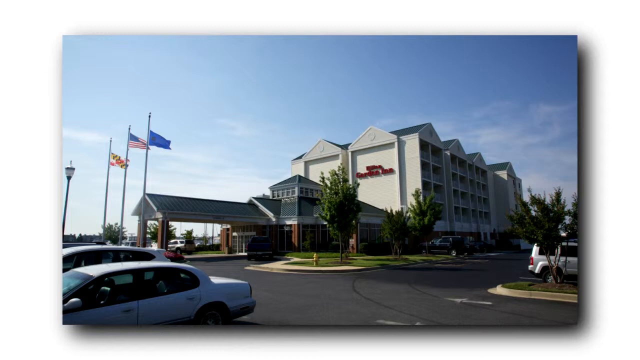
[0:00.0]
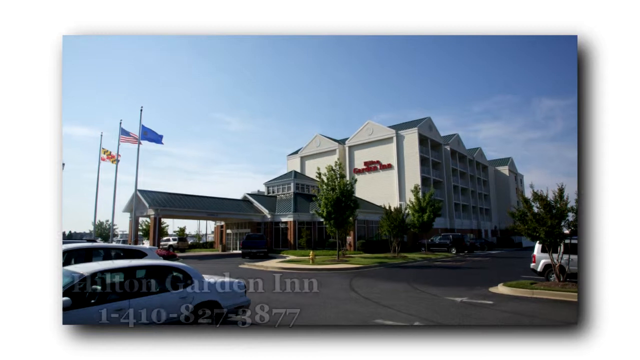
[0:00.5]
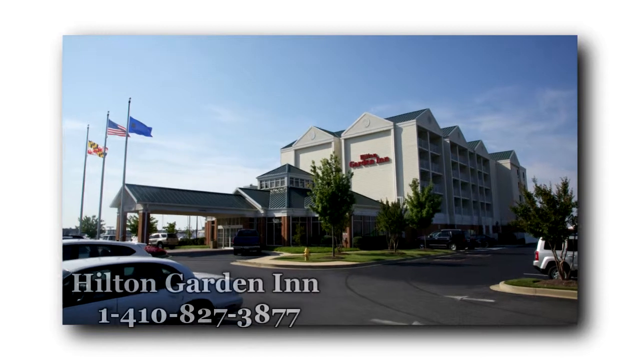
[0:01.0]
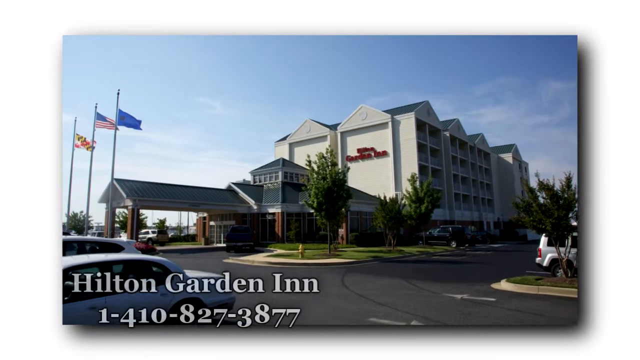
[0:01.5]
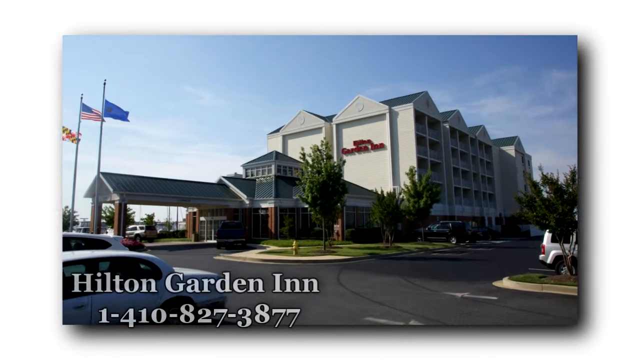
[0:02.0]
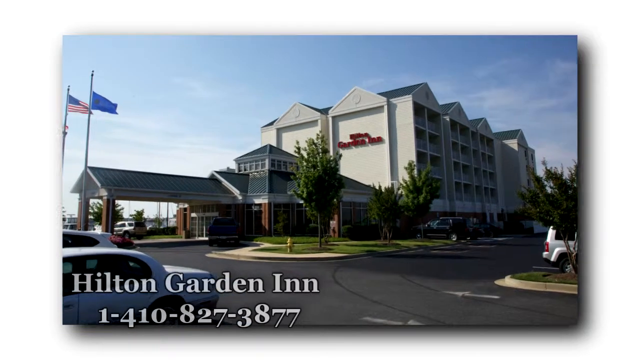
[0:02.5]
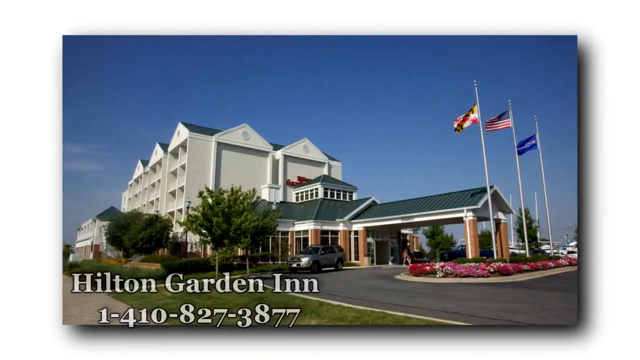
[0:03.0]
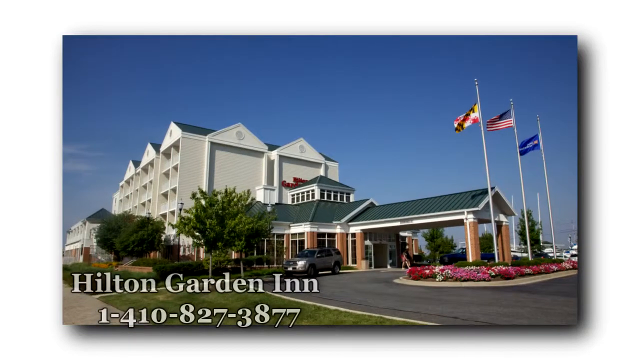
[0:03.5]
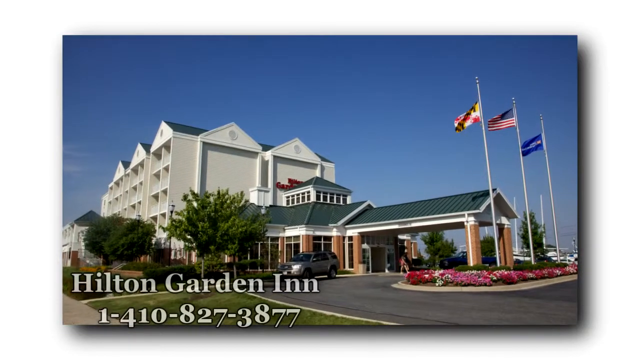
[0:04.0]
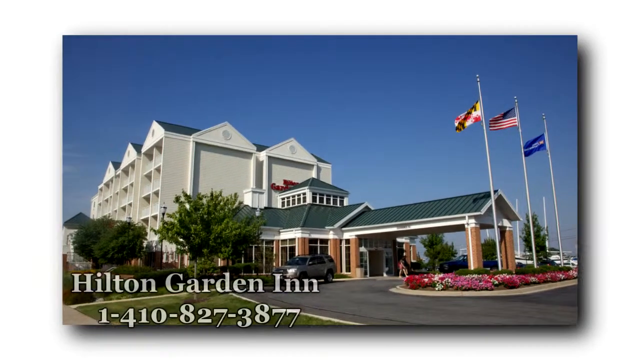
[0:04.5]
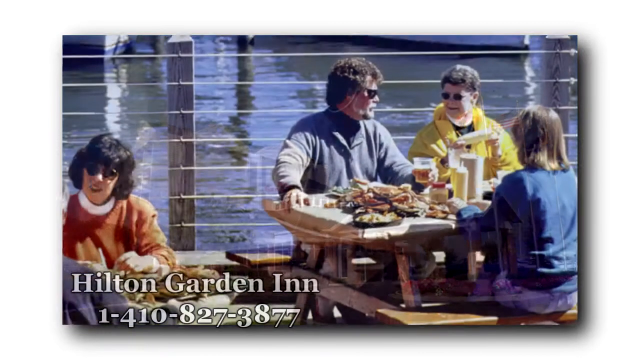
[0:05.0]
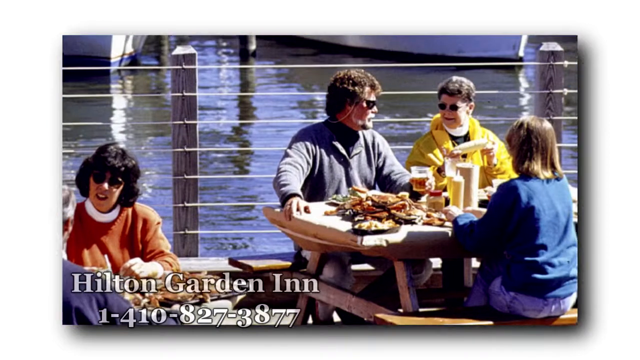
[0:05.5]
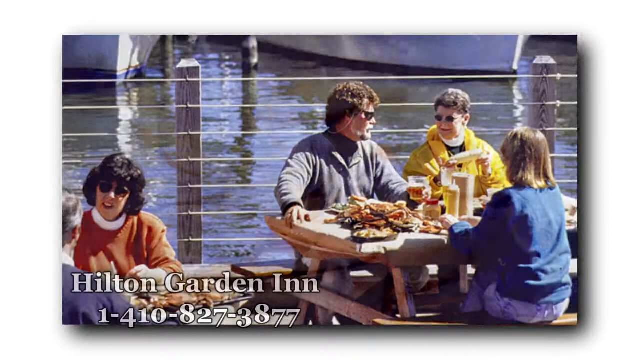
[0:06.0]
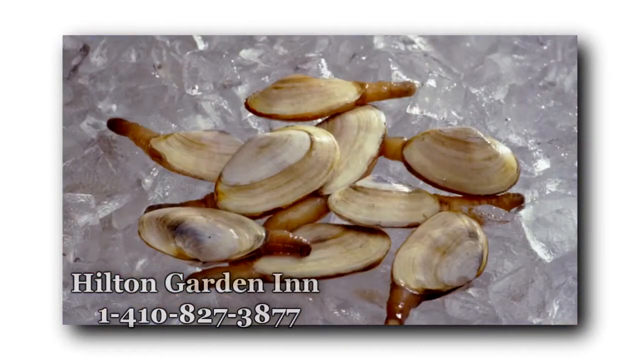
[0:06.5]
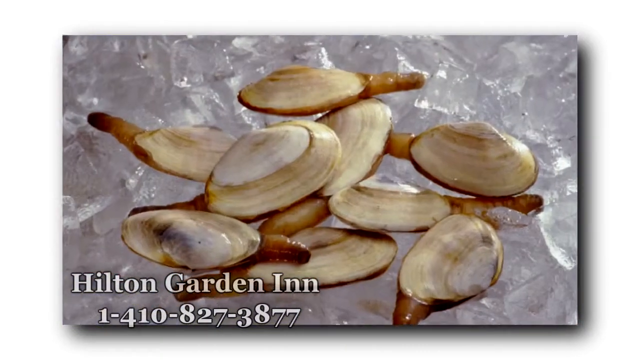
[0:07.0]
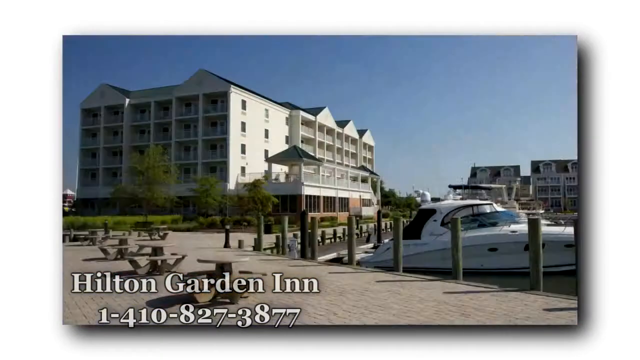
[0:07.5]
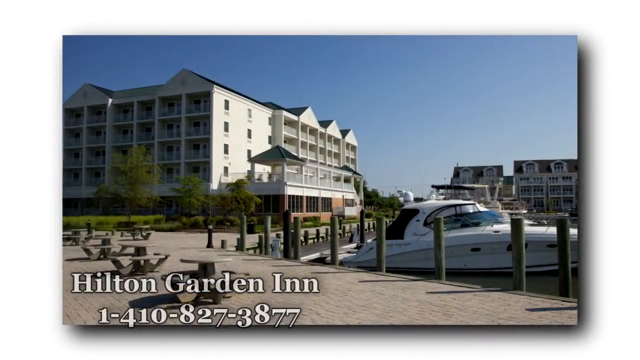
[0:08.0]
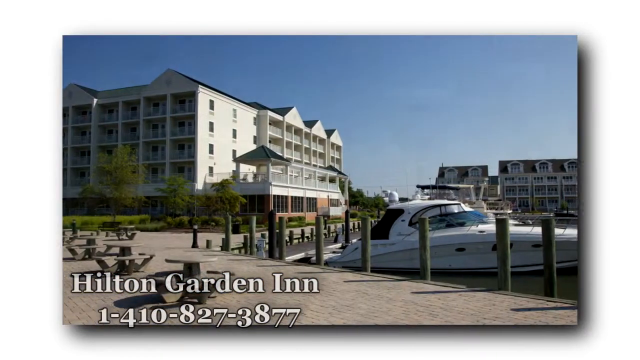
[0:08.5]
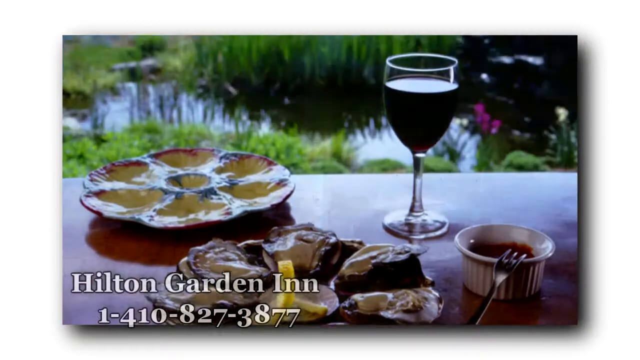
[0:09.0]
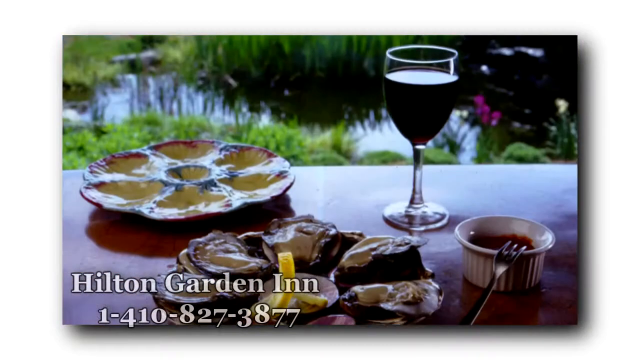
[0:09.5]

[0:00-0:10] A hotel with three flags out front appears, with the text "Hilton Garden Inn 1 4 1 0 8 2 7 3 8 7 7" on screen. The video does a little close-up of the place and shows different sites of it: it is right on the water, on a marina, with a boat there. Food is shown, along with wine and oysters on the half shell, and the place is presented as somewhere to stay with family. A picture shows a clam, and then some speed boats, probably technically yachts, appear.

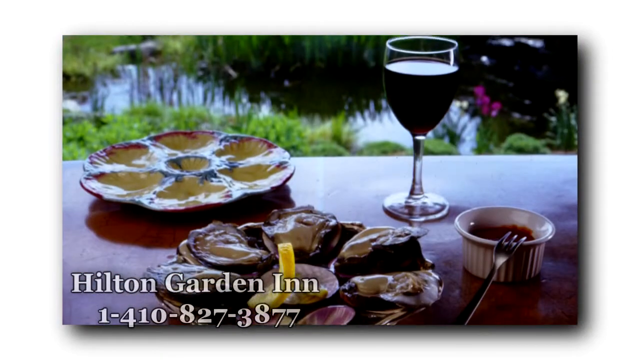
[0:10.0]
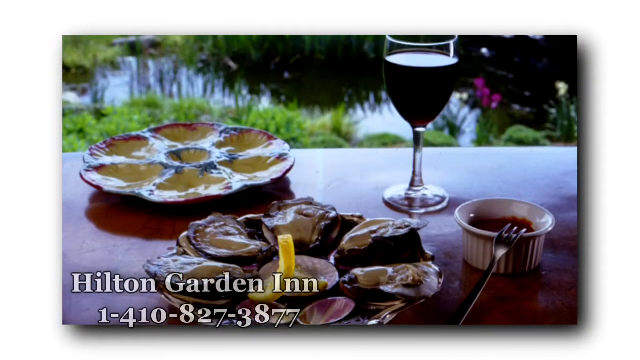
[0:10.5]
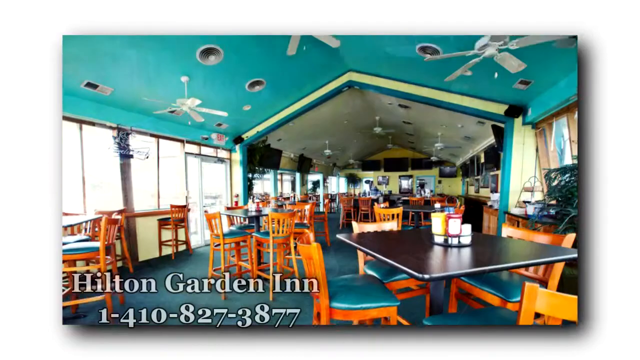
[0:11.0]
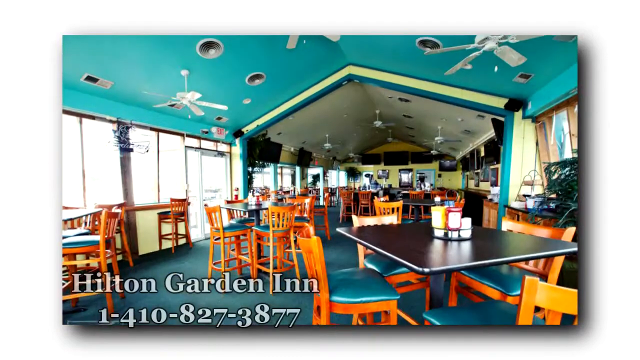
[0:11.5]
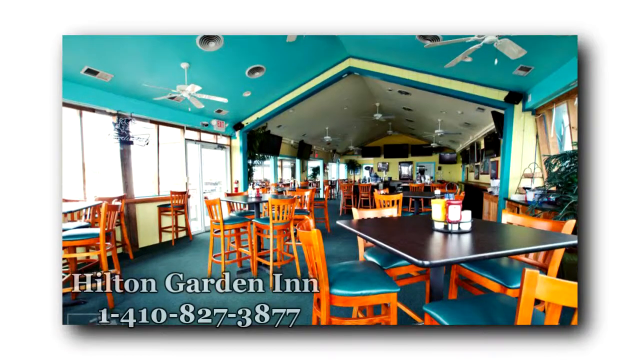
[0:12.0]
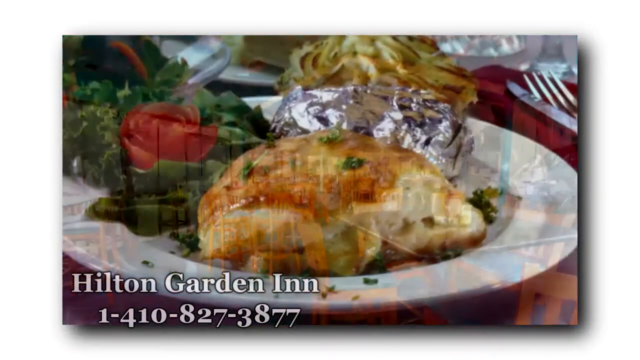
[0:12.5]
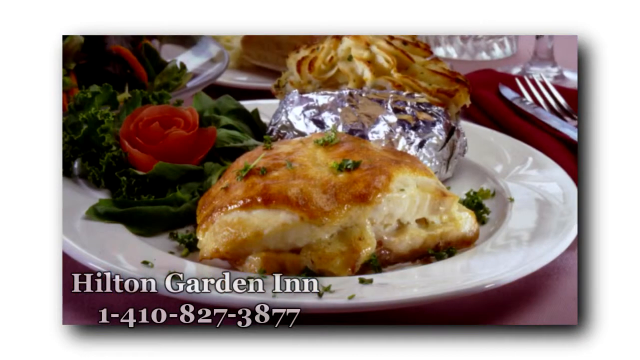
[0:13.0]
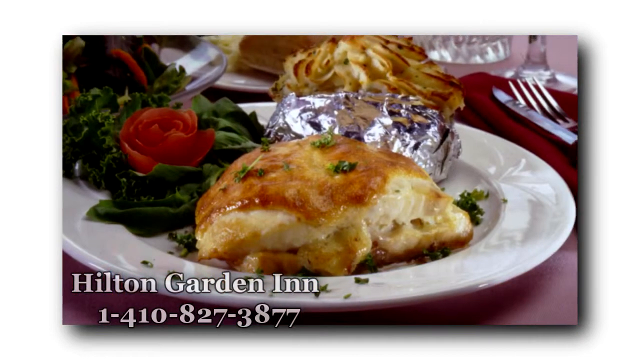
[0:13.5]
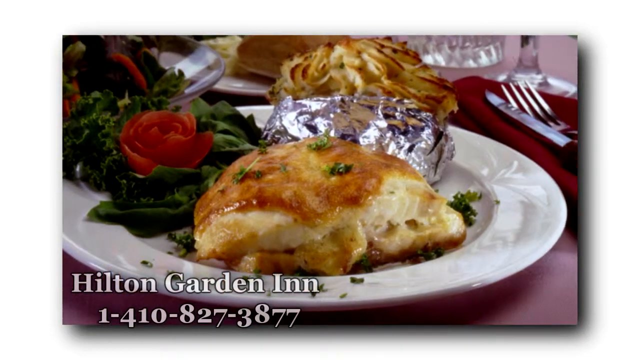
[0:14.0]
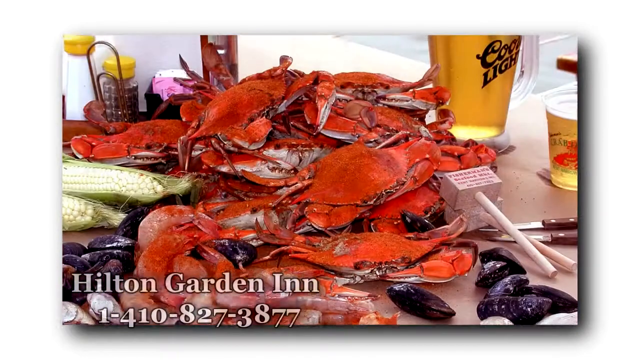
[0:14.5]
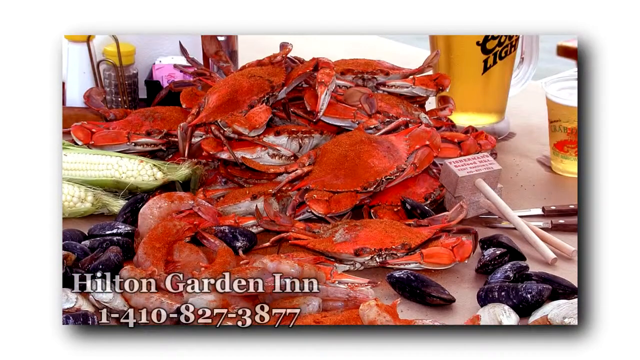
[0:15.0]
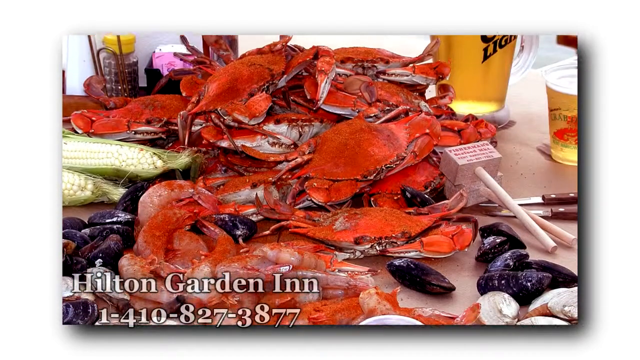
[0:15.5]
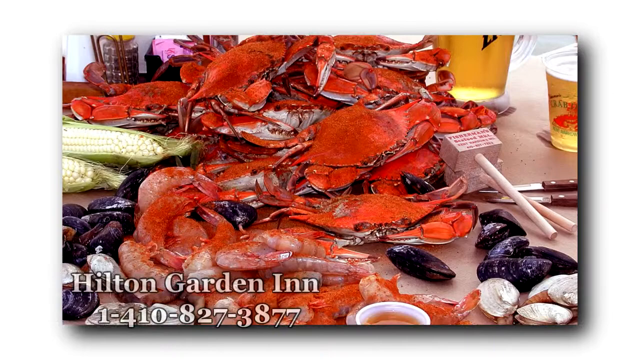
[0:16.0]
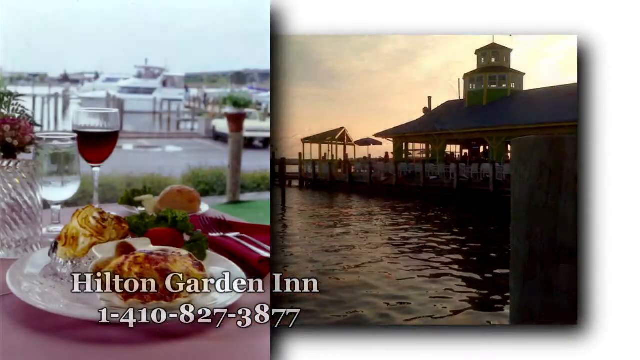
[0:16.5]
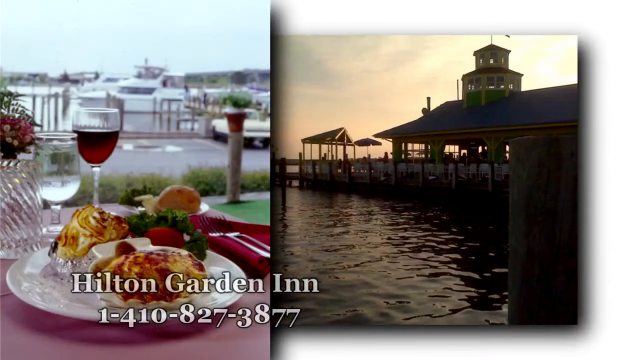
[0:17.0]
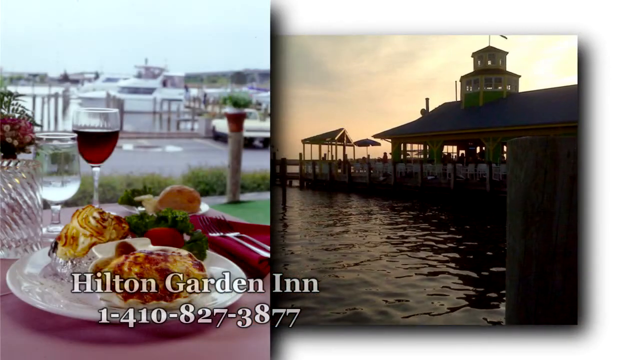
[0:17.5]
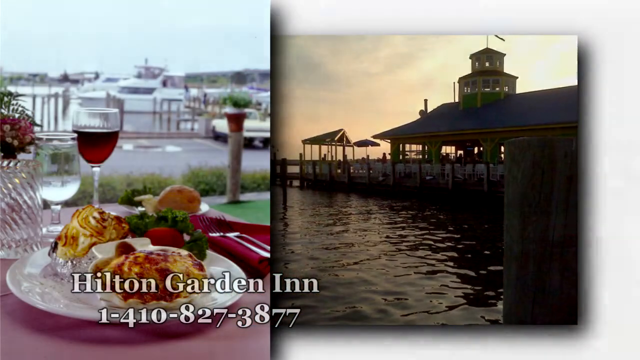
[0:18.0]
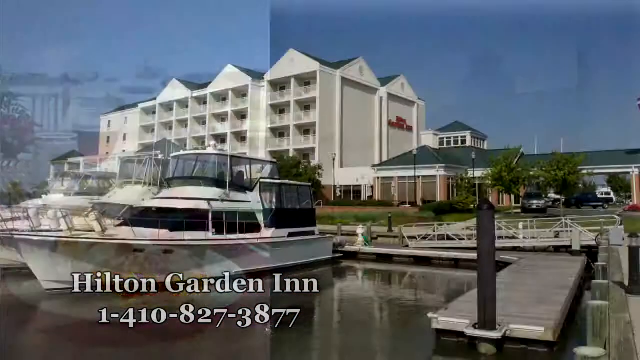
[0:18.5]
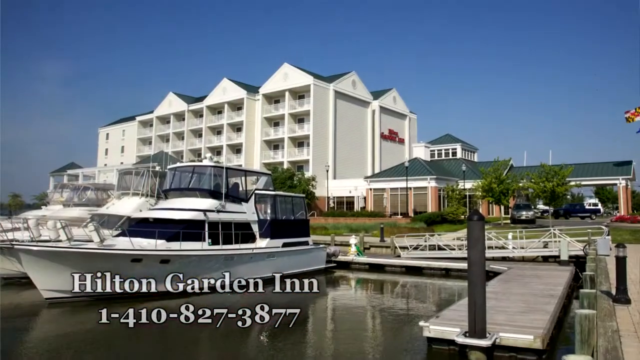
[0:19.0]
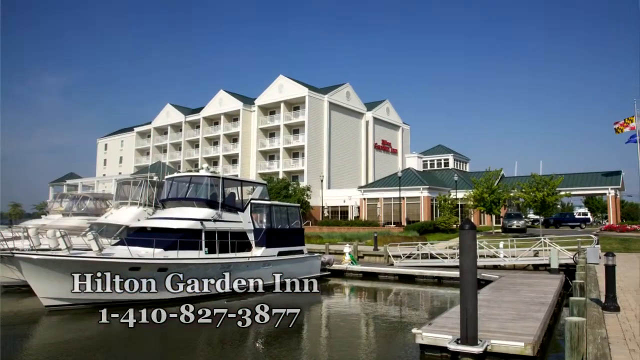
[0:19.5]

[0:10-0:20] The Hilton Garden Inn is shown on the water. The video shows boats, oysters on the half shell, clams and wine, then the indoor areas and the food available, including crabs and mussels. Yachts are on the marina. A couple of flags are out front, one of them the Maryland flag.